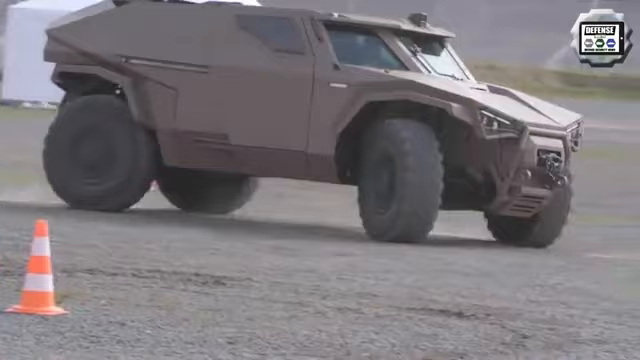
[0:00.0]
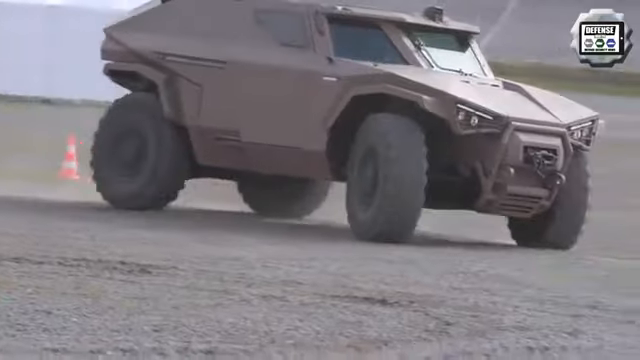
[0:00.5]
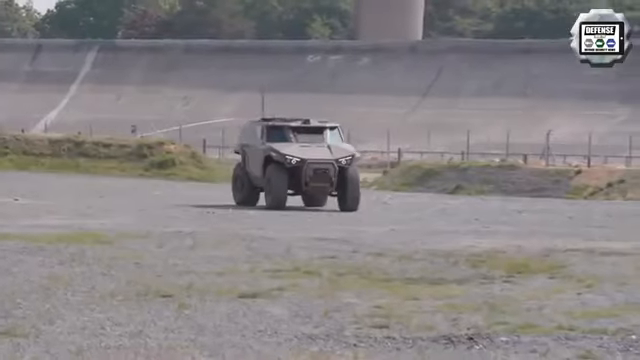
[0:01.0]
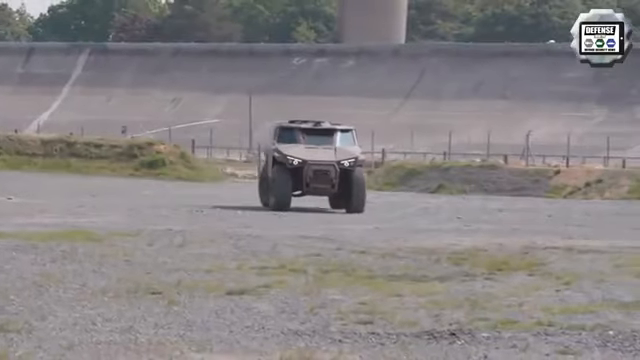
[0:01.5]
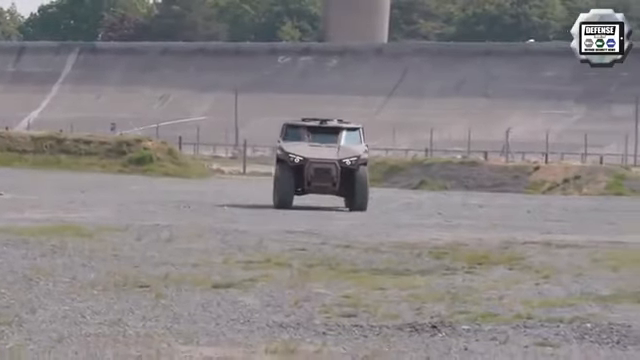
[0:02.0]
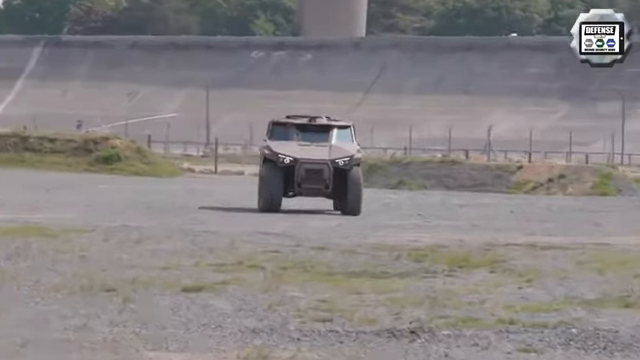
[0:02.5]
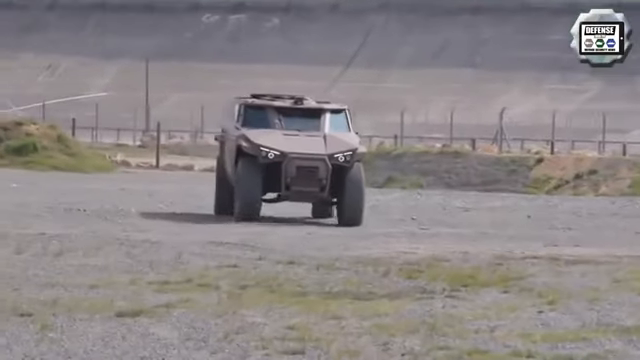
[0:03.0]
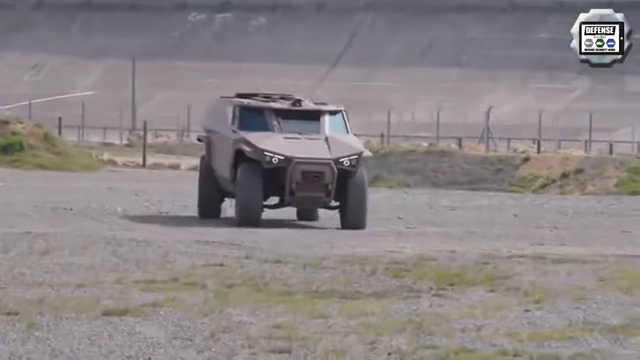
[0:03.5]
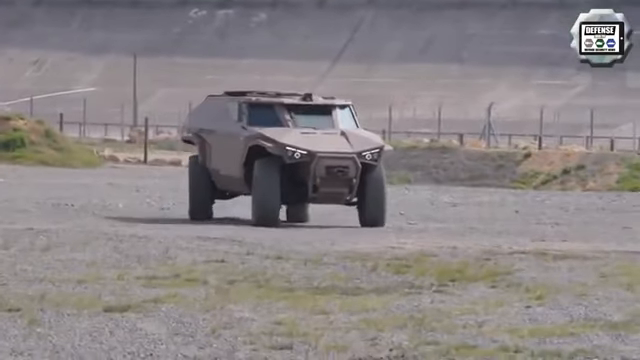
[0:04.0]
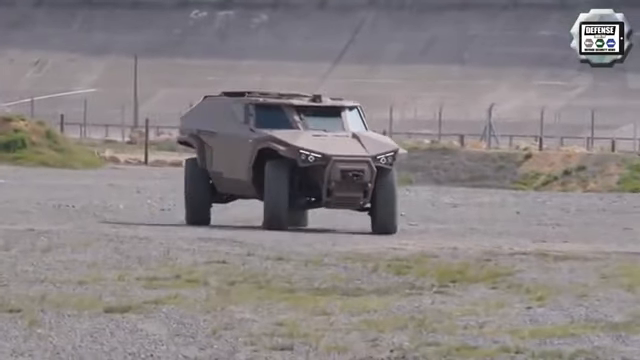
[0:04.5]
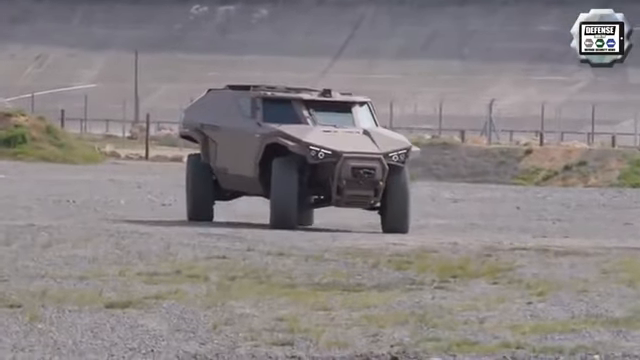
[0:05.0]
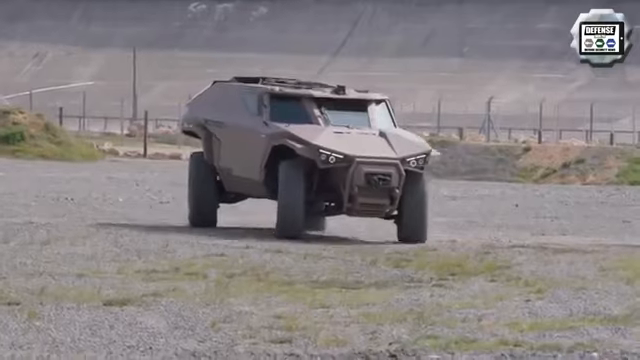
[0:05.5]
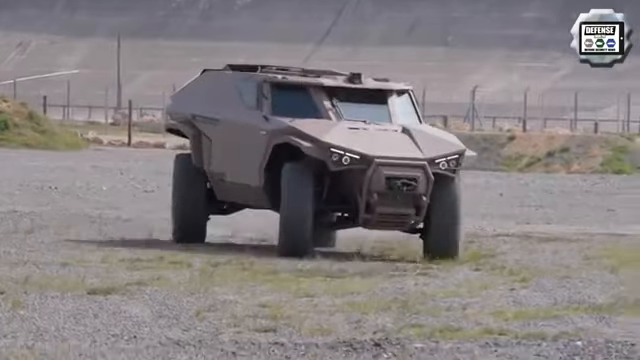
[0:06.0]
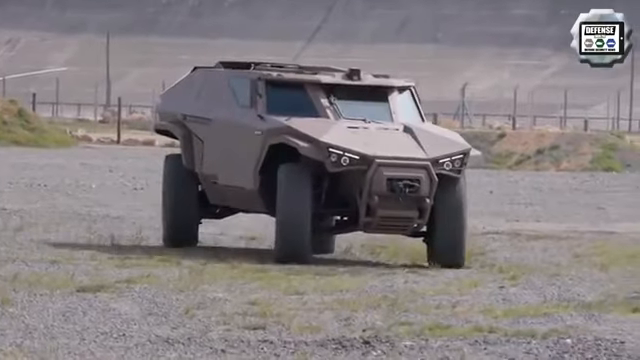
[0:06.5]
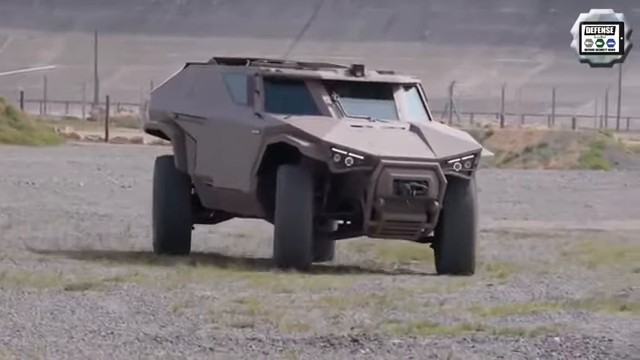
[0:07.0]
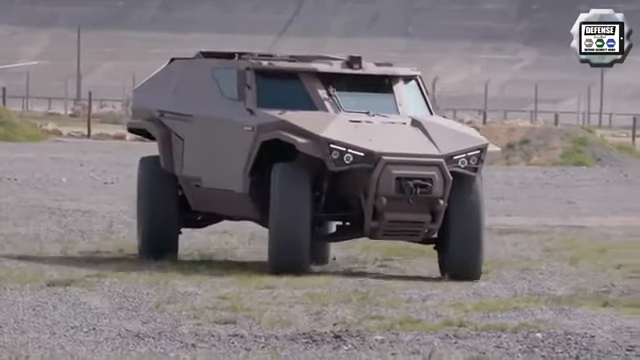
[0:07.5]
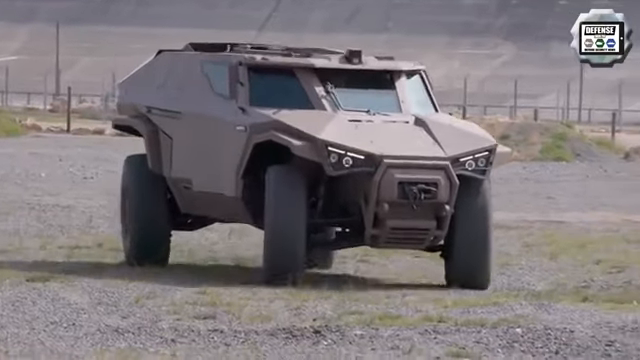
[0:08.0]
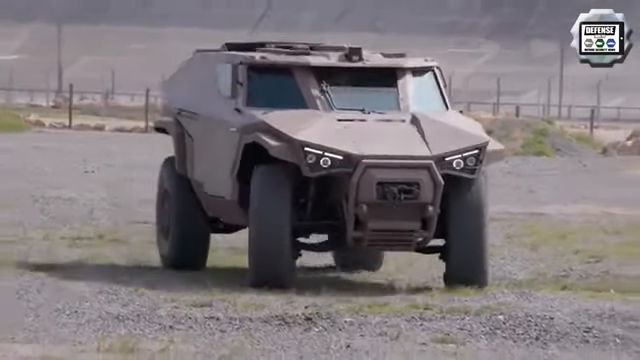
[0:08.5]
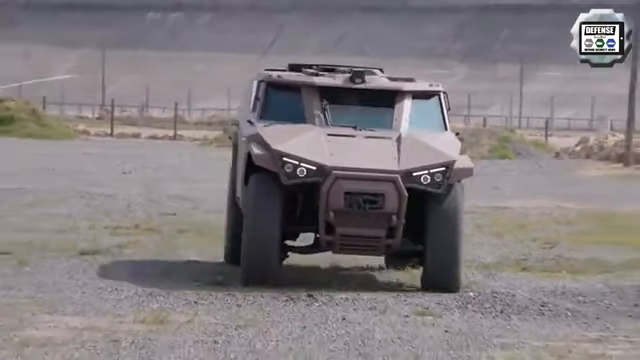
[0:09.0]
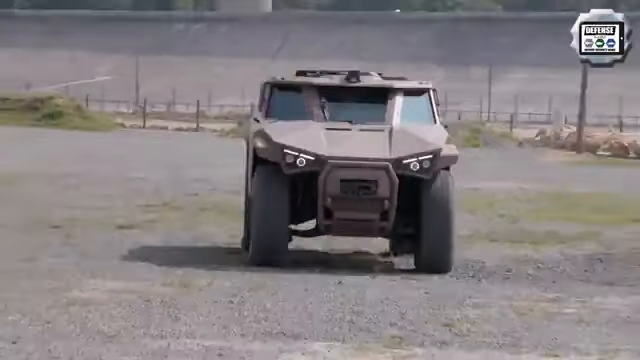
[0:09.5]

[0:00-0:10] A vehicle that looks like a Humvee drives through an empty basin. Beside it is a large pillar with curved concrete side walls. The vehicle drives straight, but its body is at an angle, out of alignment, as it comes forward. An orange and white construction cone is visible. The Humvee keeps coming closer, and then a brand-new model appears in a room inside a house or building. In the upper right corner there is something that looks like a measurement, apparently with very small white print.